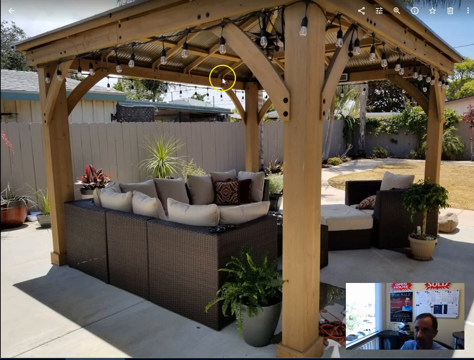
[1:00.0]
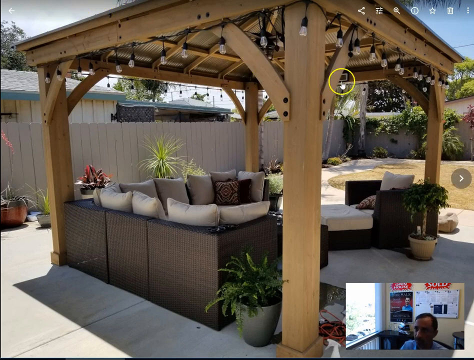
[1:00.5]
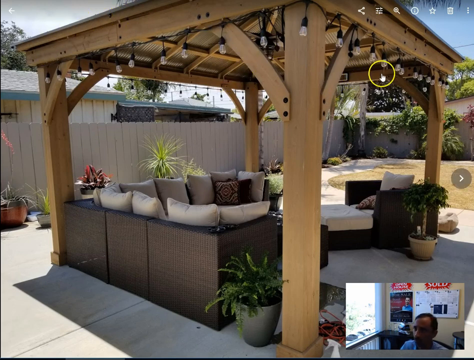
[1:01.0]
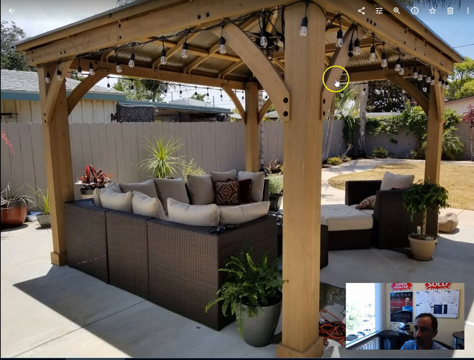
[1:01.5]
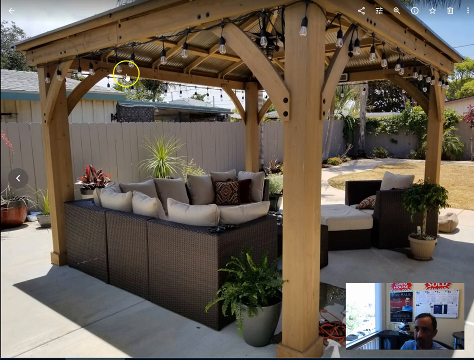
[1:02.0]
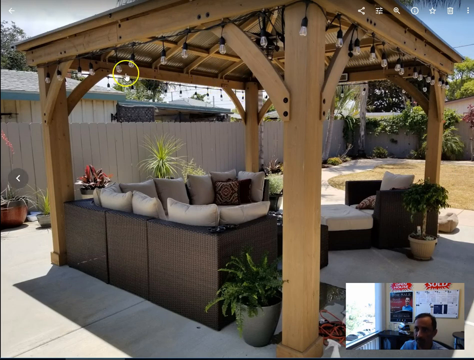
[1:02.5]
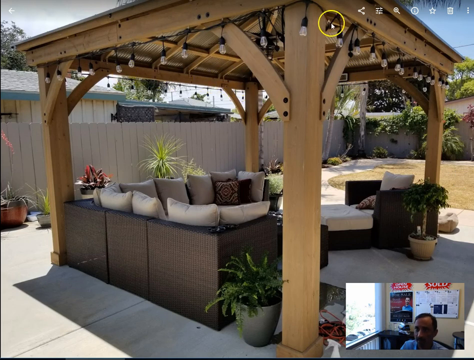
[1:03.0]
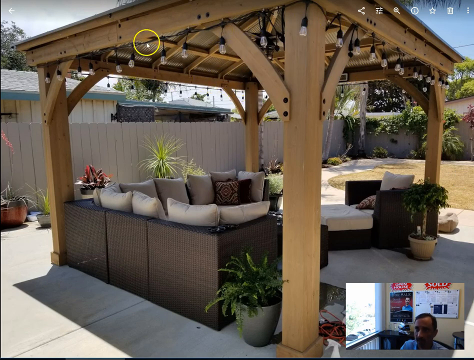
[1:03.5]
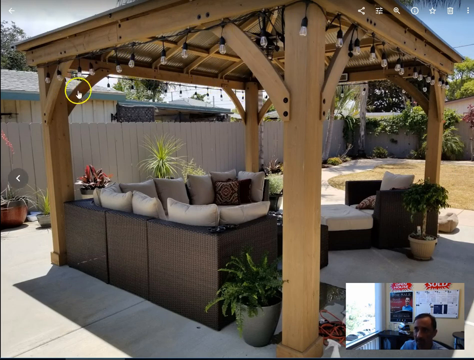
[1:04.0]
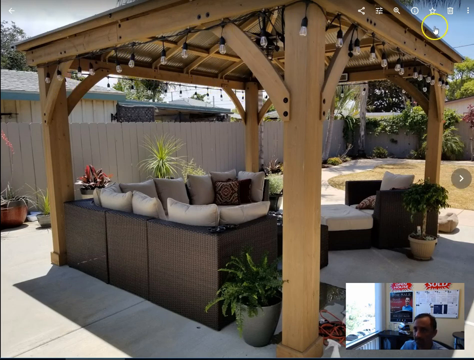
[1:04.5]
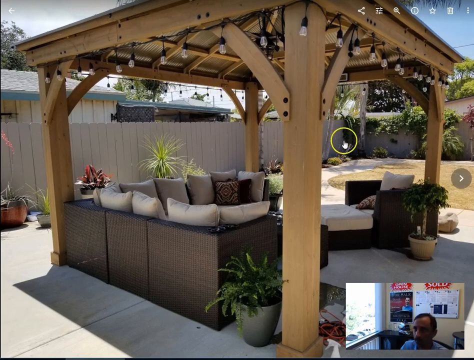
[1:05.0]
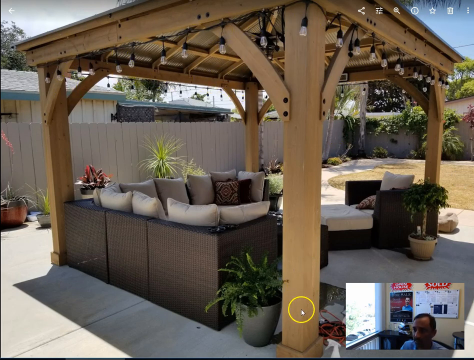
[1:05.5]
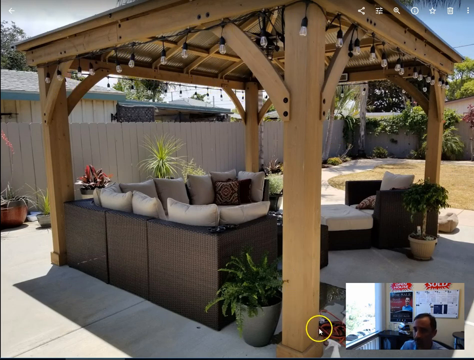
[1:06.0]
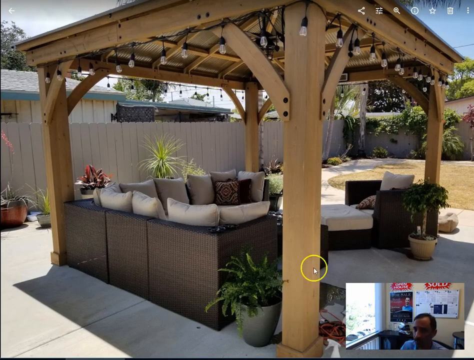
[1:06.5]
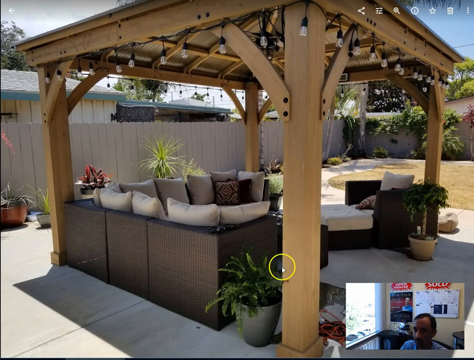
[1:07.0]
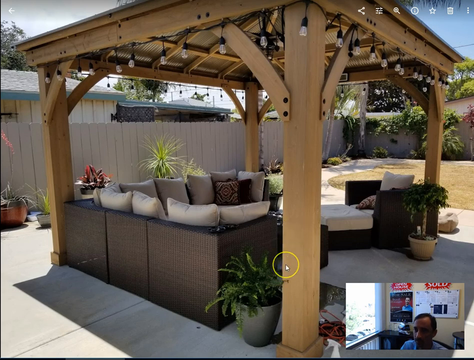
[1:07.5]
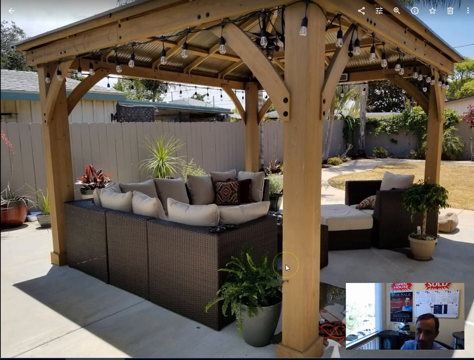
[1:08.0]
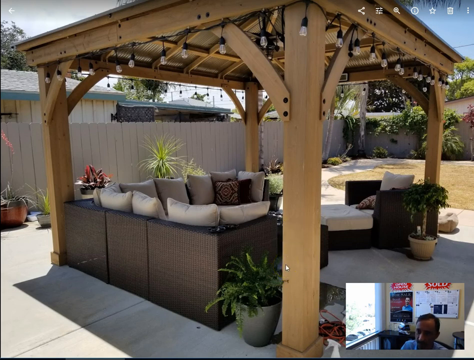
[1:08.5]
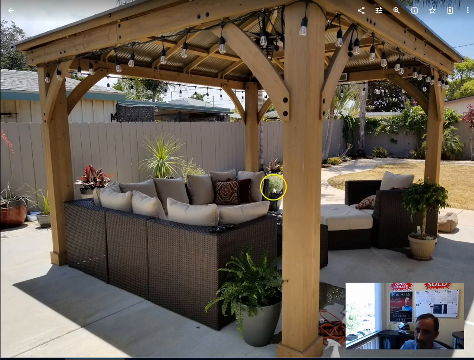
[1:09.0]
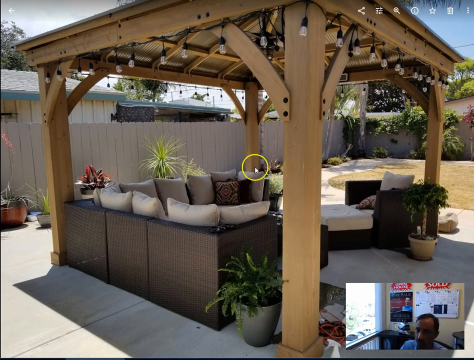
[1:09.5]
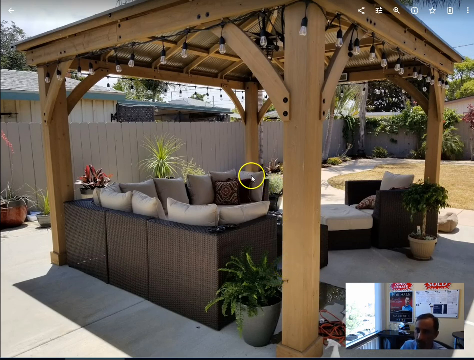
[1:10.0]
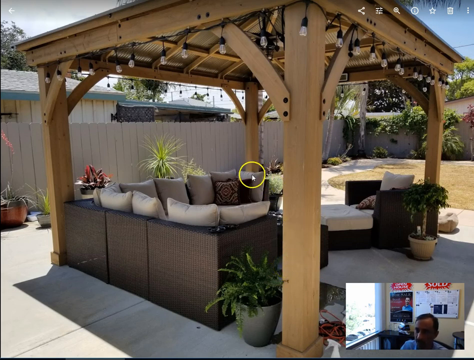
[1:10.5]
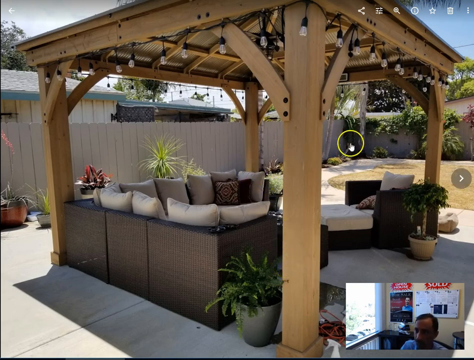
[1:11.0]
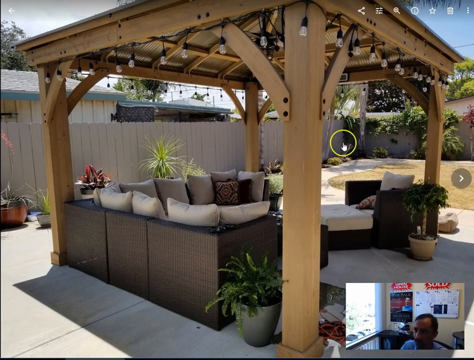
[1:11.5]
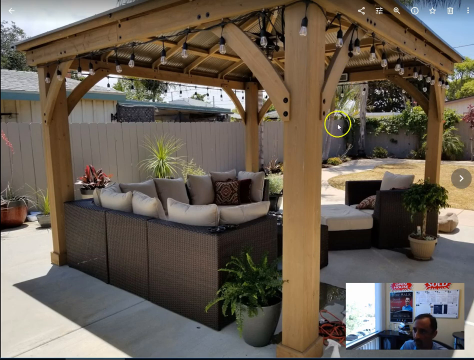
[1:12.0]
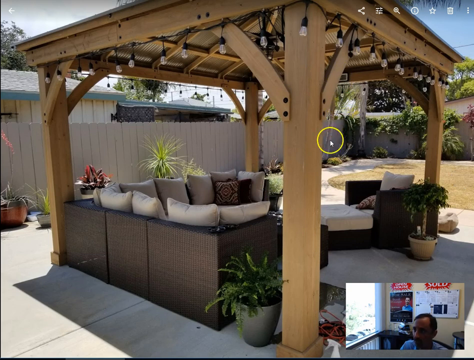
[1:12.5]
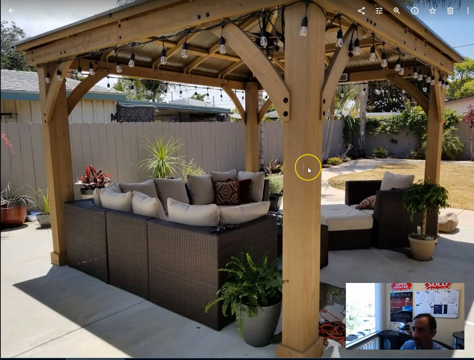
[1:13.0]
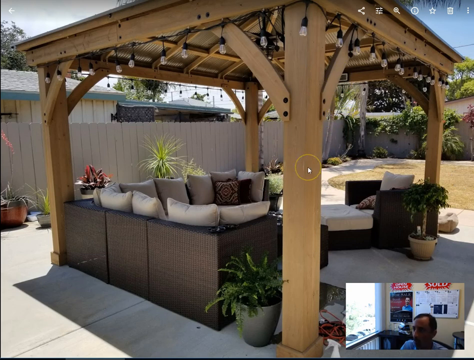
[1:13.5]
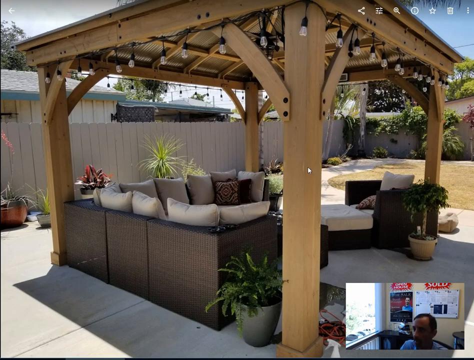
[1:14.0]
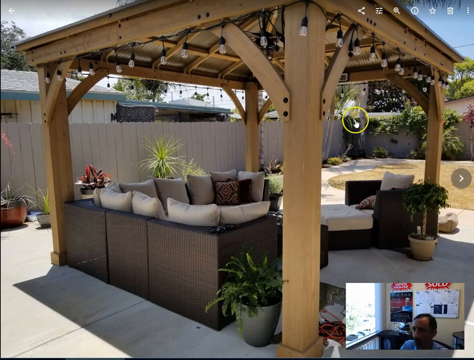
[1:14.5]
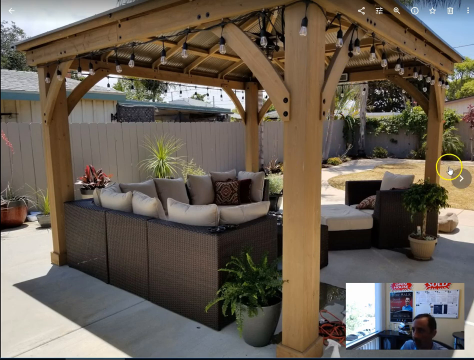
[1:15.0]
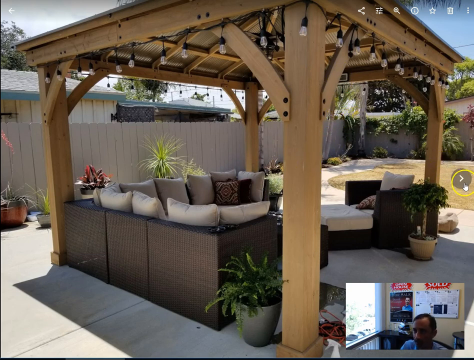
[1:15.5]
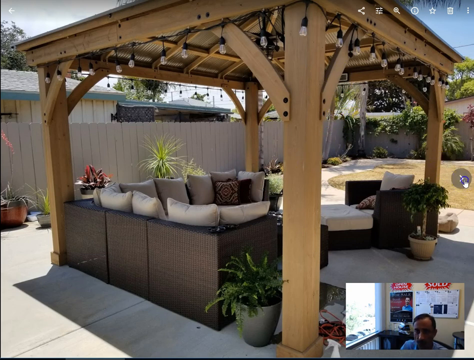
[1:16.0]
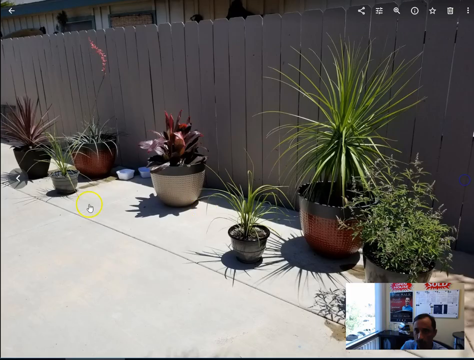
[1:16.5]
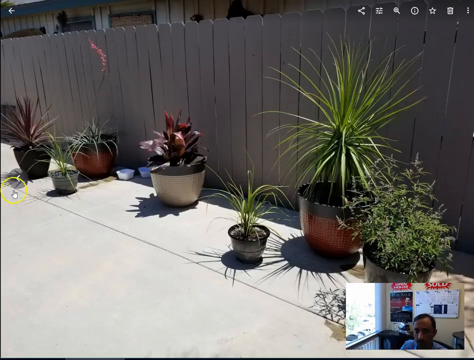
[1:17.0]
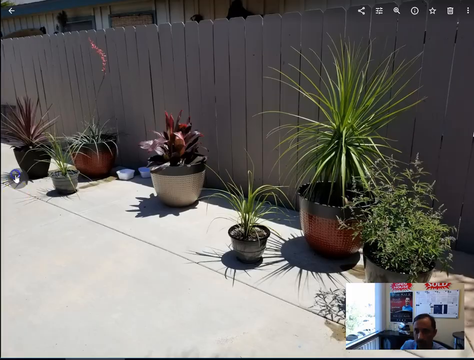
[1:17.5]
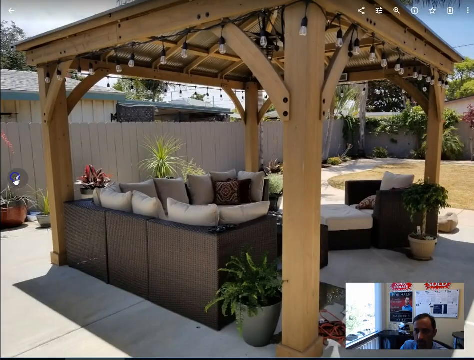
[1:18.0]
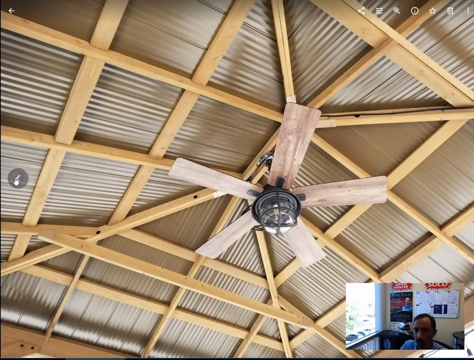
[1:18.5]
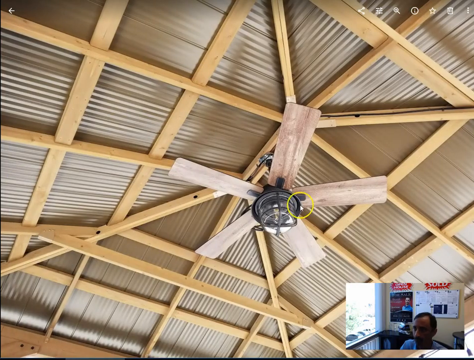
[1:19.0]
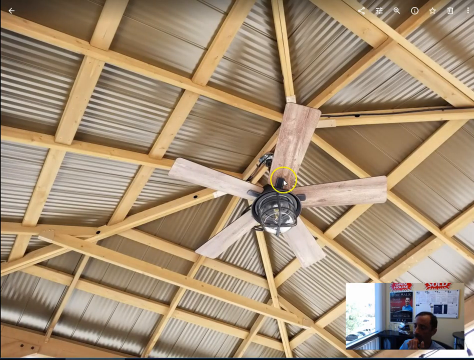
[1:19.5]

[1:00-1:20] A gazebo that looks like it is made of light brown wood has a lot of lights hanging from the top. Inside it are what look like outdoor sofas and a chaise lounge. The backrests are a tan-gray color, and the frames of the sofas and chairs are dark brown. A lot of pots are around it. A cursor with a yellow circle over it moves around and hovers over the legs of the gazebo. In the lower right corner, a picture-in-picture shows a man who seems to be explaining the features of the gazebo. The gazebo appears to be outside in a backyard, with a fence around it and a small patch of green grass. The video then cuts to another angle showing another part of the backyard with a bunch of potted plants.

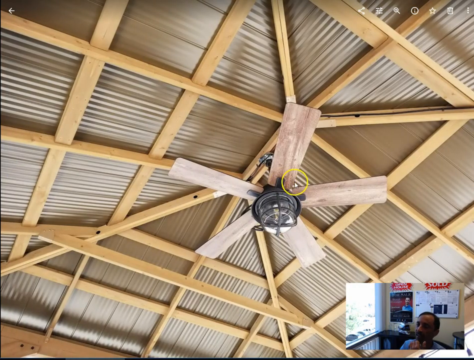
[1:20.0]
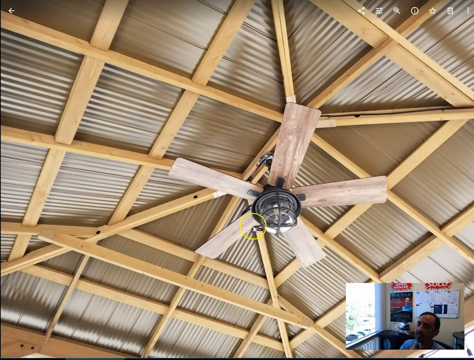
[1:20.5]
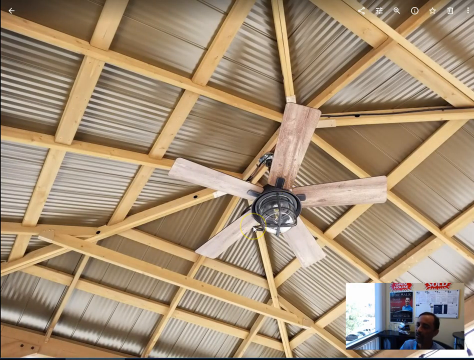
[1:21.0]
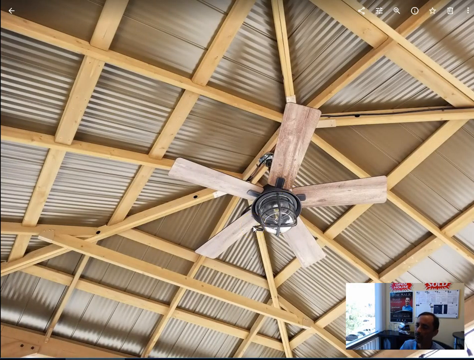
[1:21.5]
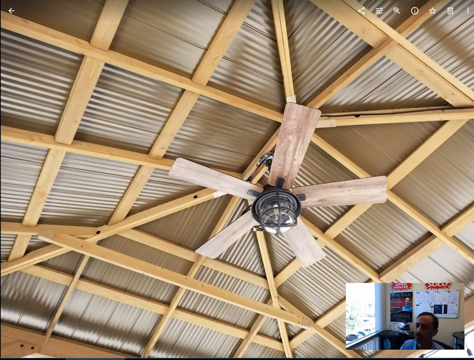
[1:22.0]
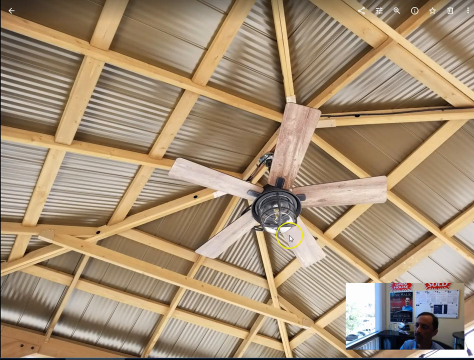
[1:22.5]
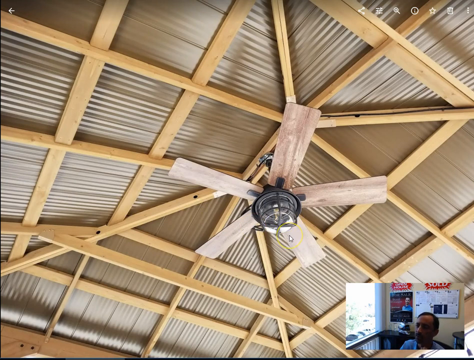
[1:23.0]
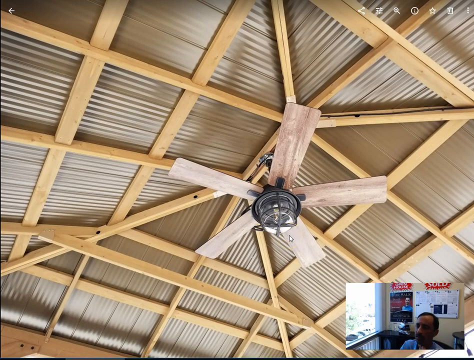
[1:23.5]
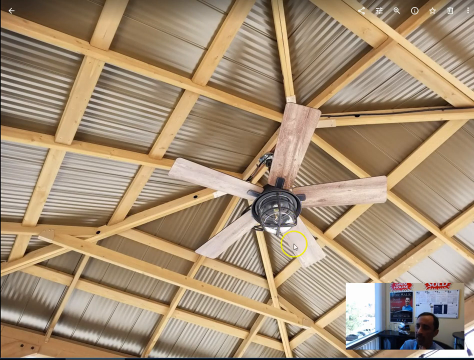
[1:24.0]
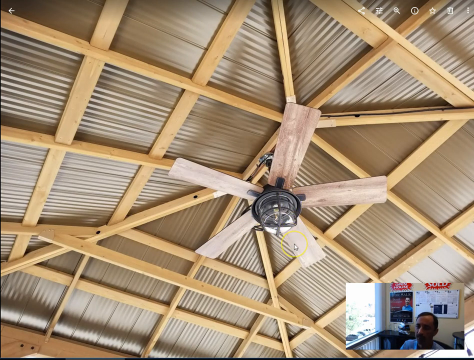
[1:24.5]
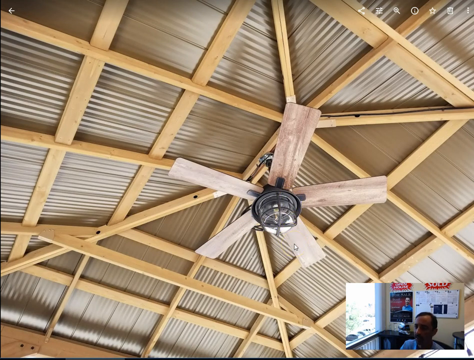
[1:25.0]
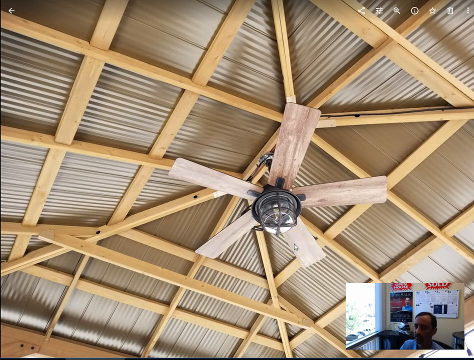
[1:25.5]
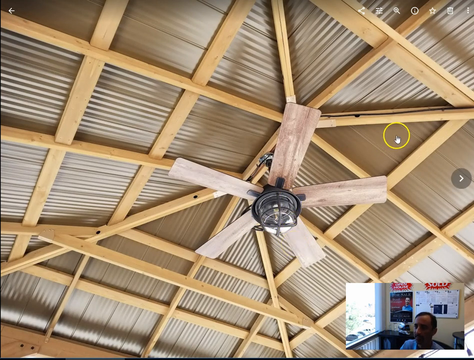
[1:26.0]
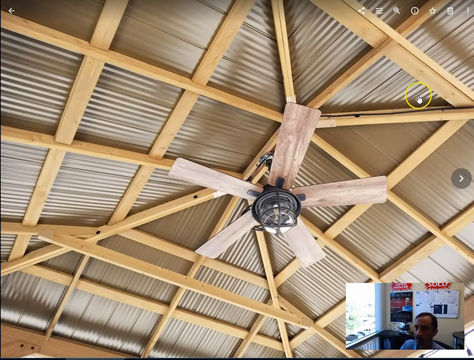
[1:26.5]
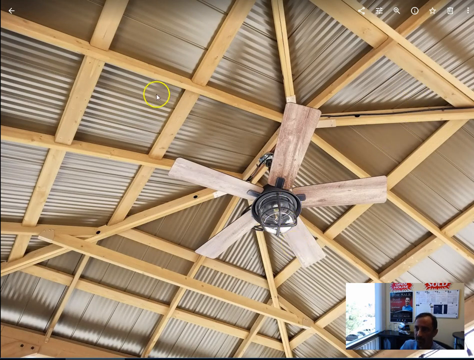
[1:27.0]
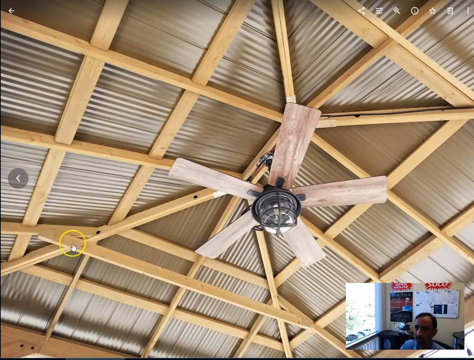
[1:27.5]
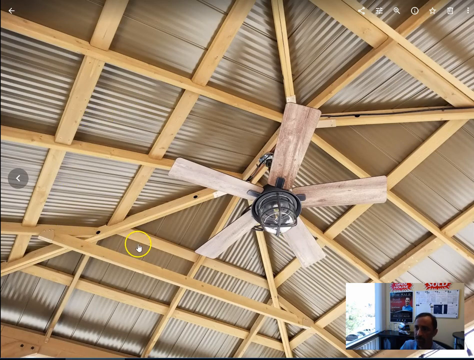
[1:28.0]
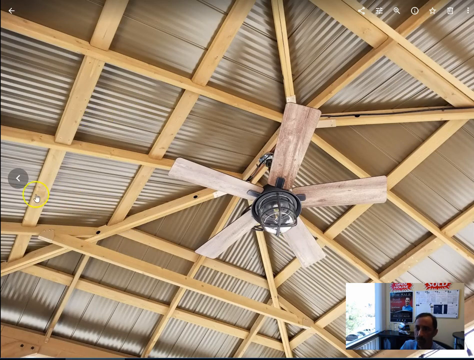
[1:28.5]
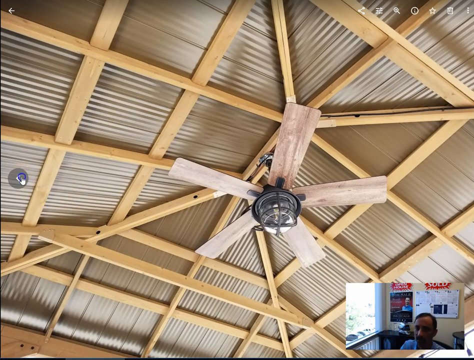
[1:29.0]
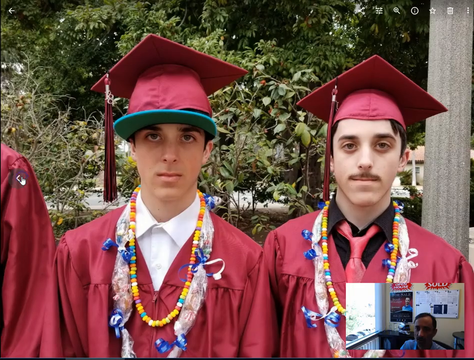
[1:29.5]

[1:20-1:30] The ceiling of a gazebo has a ceiling fan that looks like it is made of wood. The part with the lights looks black, and the gazebo's frame appears to be light-colored wood. A cursor with a yellow circle around it is in front of the ceiling fan. In the bottom right corner is a picture-in-picture video of a man who seems to be showing the gazebo's features using the cursor. He clicks a chevron on the left side of the screen, which brings up a graduation picture of two men in burgundy caps and gowns.